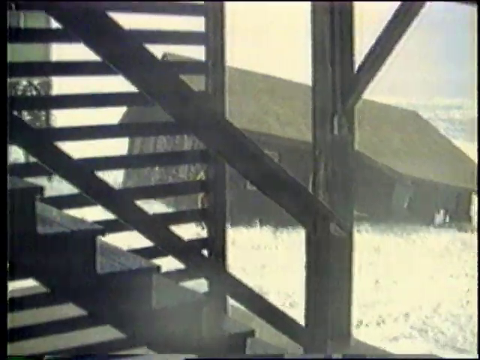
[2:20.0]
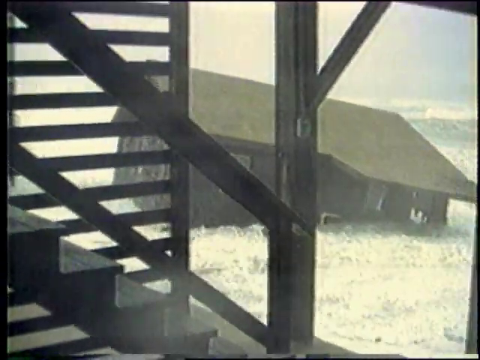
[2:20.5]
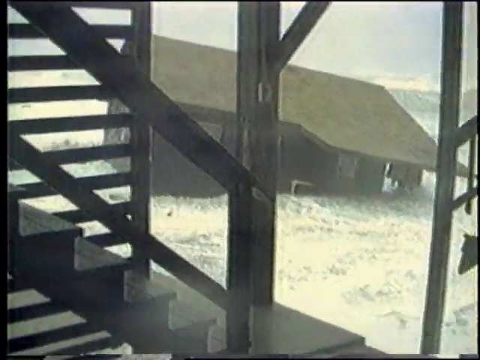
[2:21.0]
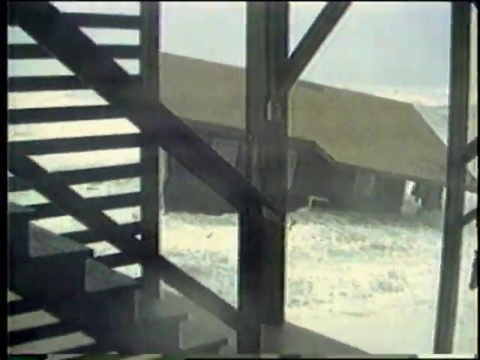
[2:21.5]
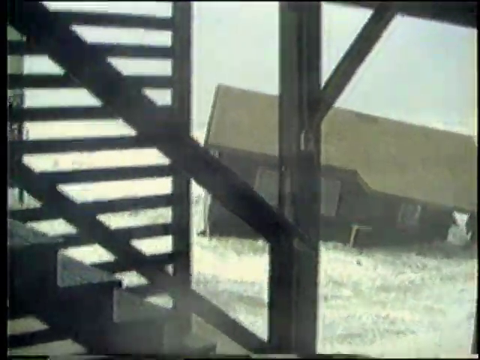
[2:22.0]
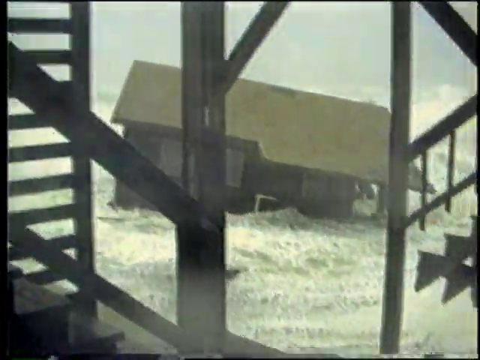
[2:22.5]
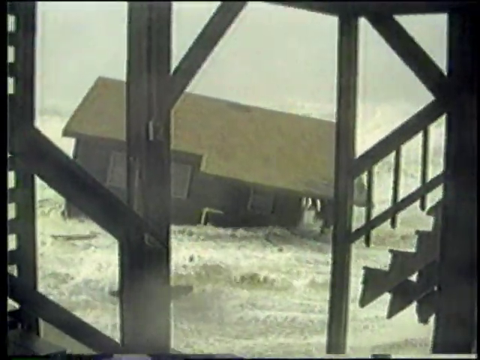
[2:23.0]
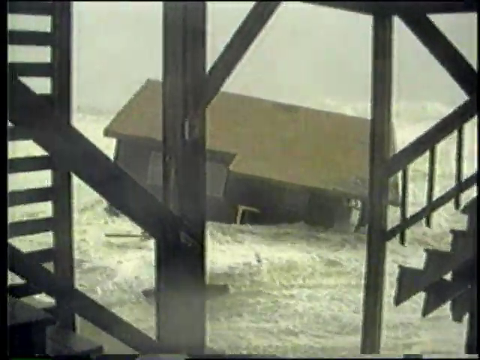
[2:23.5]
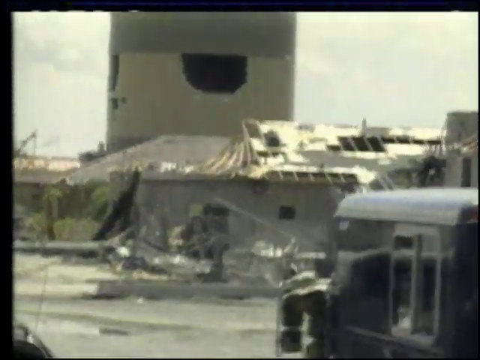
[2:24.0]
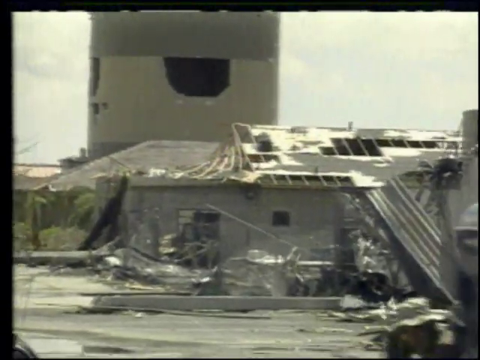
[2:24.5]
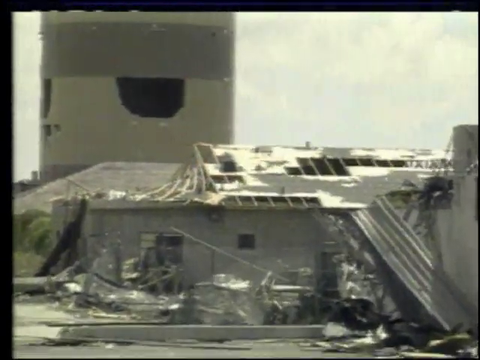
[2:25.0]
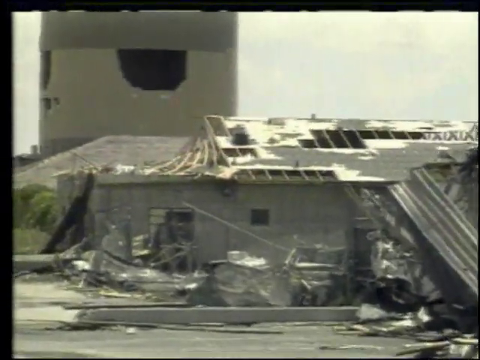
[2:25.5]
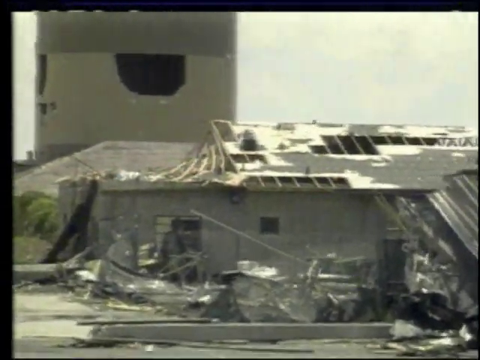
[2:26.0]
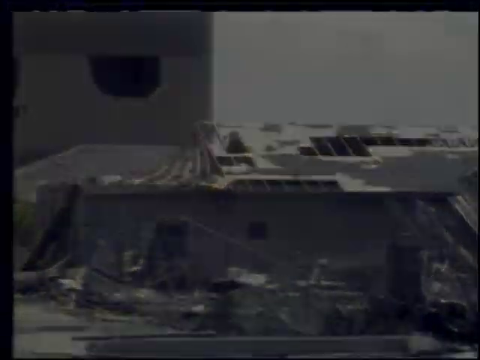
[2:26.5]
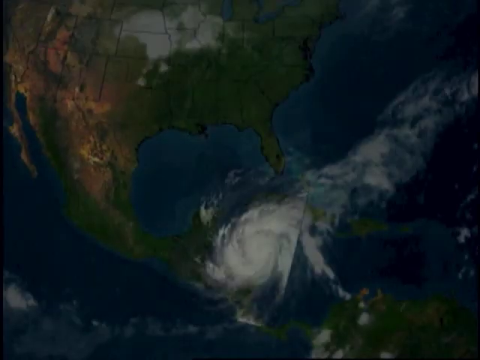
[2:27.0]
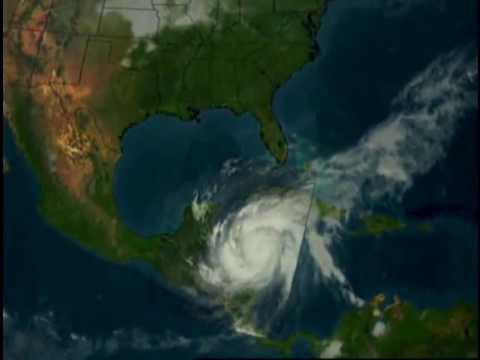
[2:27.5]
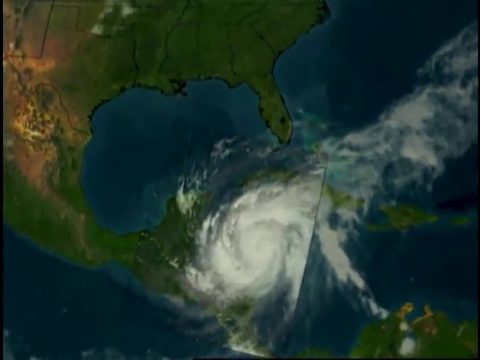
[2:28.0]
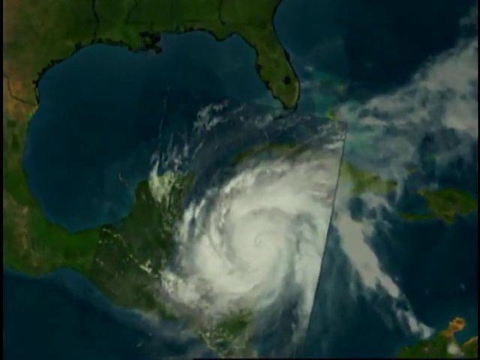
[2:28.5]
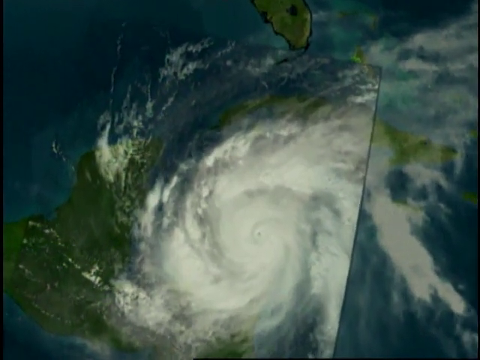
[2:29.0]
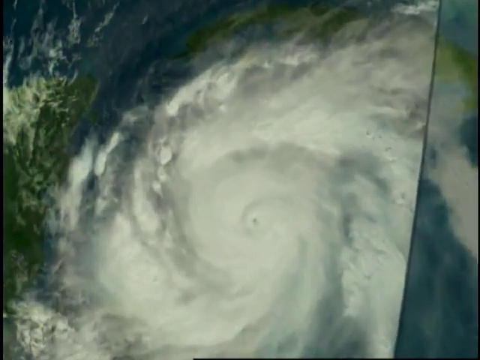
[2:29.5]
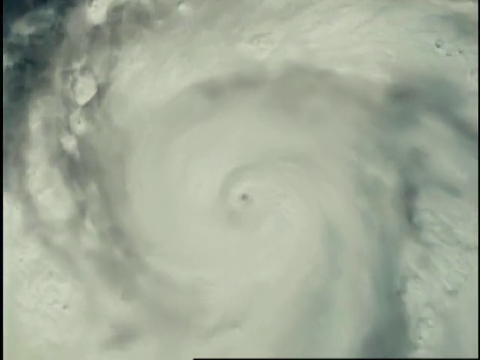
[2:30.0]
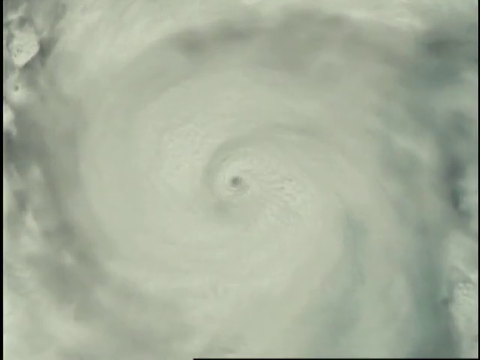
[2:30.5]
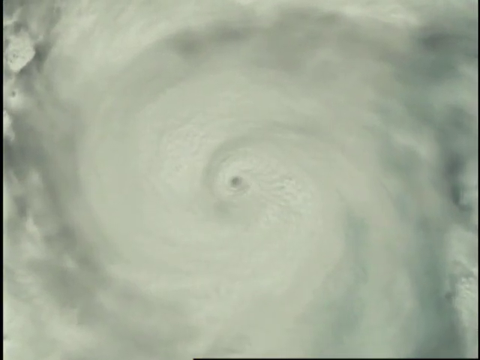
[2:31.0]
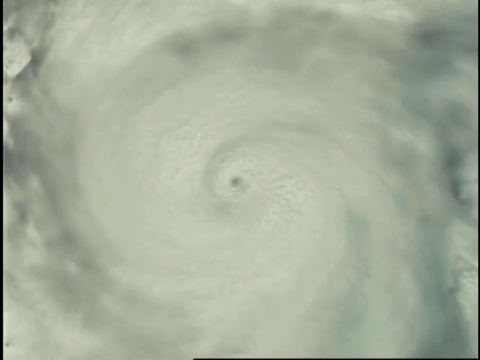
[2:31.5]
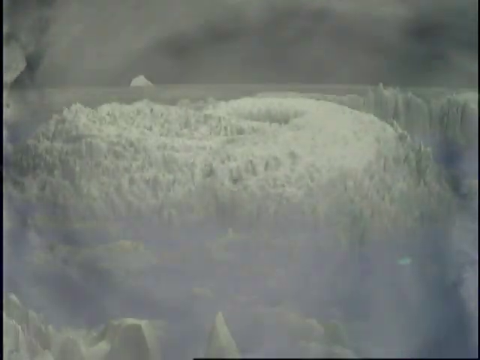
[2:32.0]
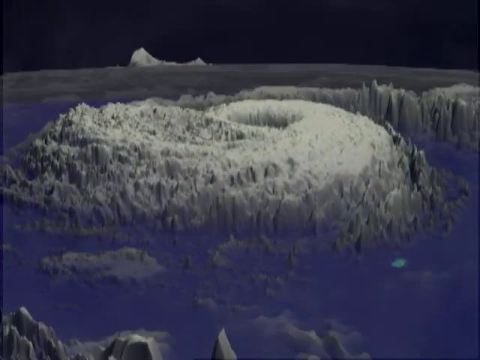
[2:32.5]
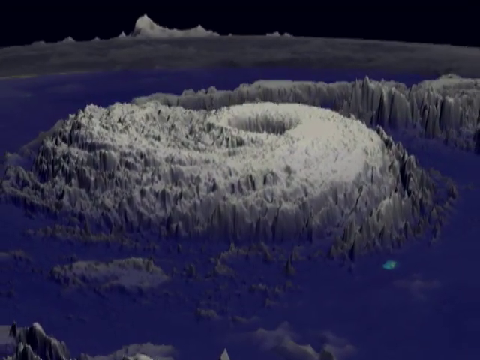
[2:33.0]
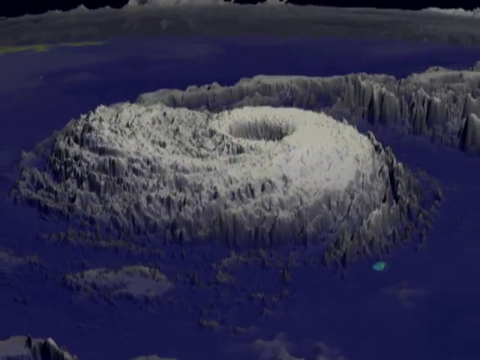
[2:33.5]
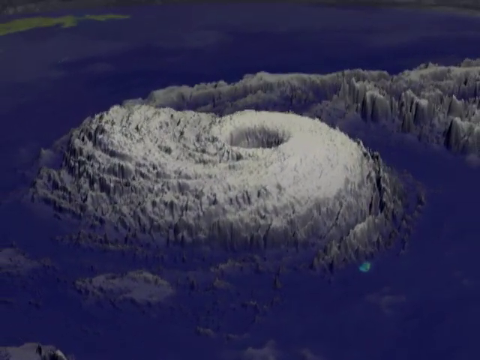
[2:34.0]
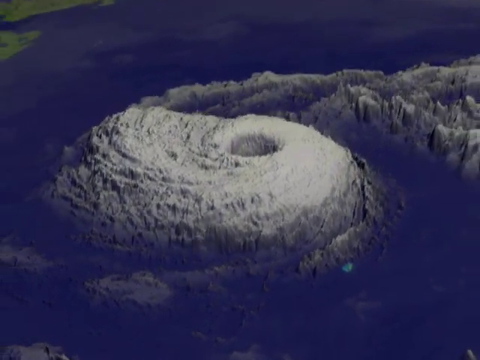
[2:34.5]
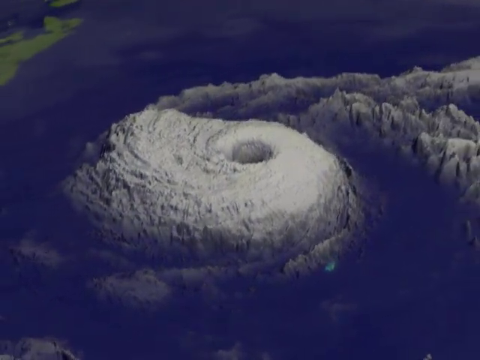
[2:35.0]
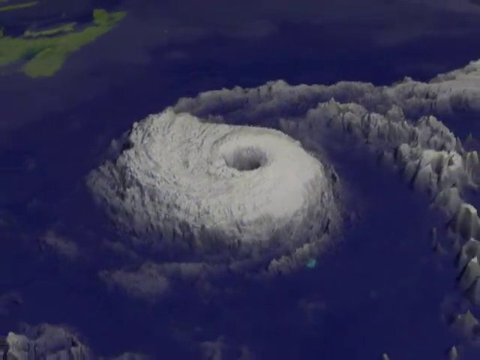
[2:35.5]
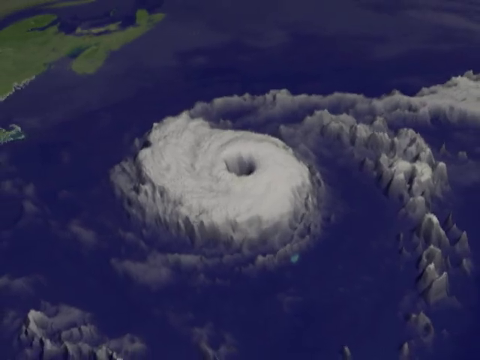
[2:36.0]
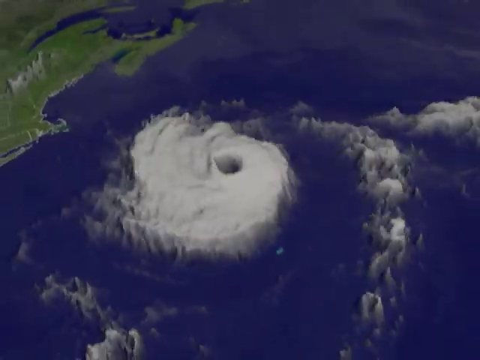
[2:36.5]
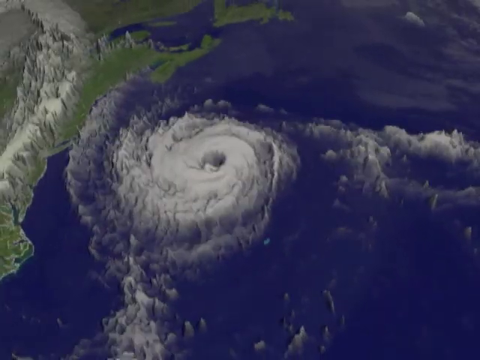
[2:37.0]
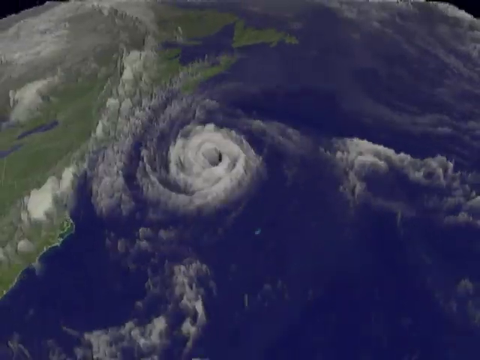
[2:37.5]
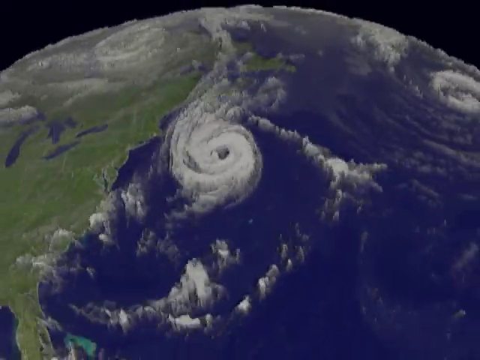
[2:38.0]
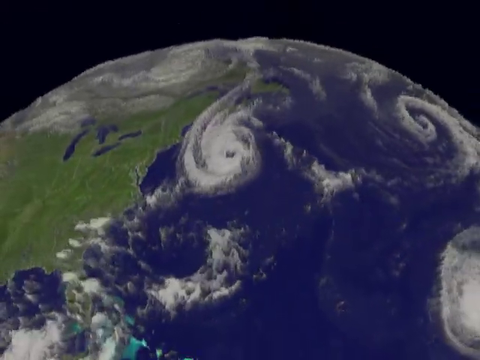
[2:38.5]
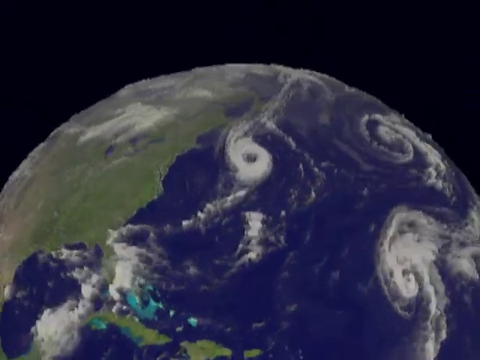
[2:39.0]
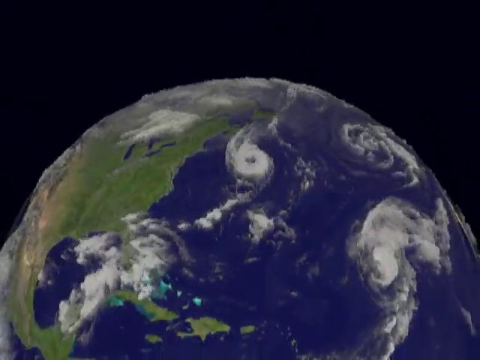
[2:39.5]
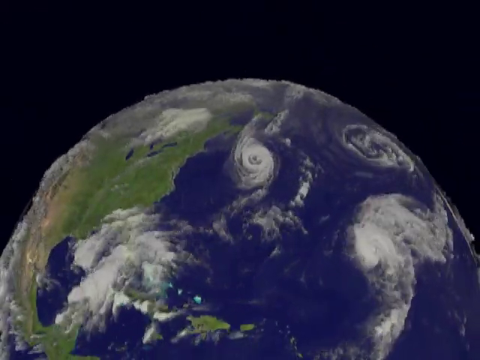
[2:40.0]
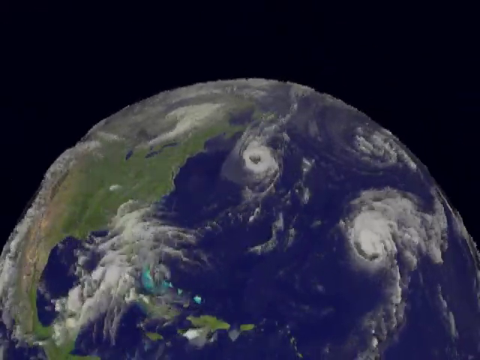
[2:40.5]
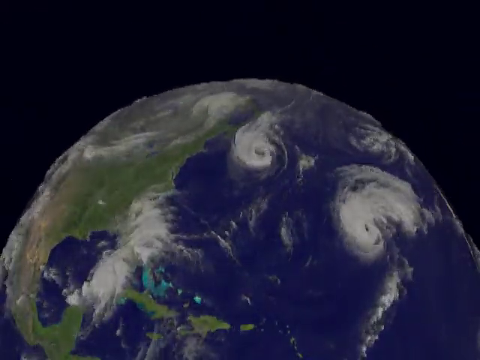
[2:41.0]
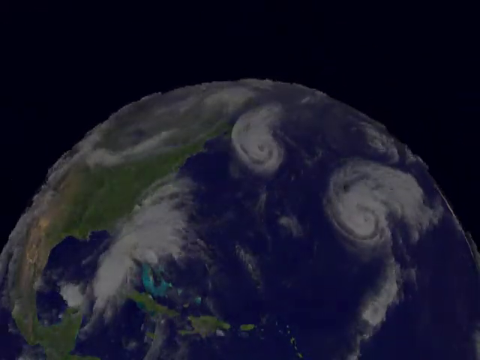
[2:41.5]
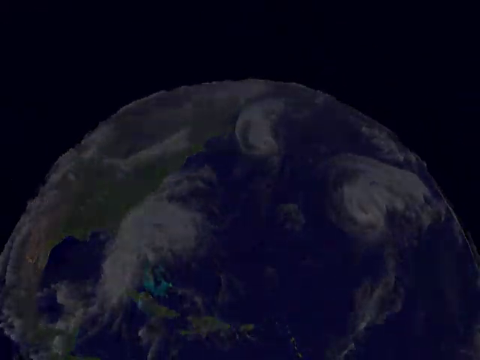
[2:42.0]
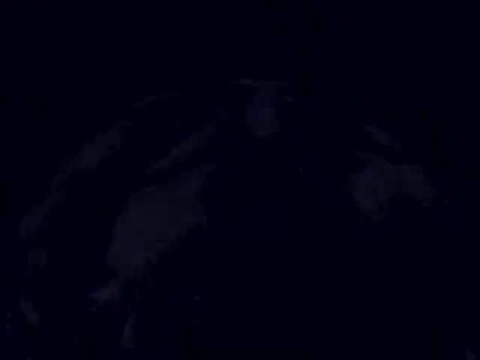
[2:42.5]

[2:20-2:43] Stairs appear, apparently with the camera behind them, going up from the bottom center of the video to the middle left. Some wood around the stairs looks like beams. In the background, churning water sweeps away a house with a green roof, the water moving from the left side of the image to the right. Next comes what looks like the aftermath of a hurricane: a city street at the bottom of the image and a gray building that looks like much of its roof has been blown off, with rafters and the boards of the roof visible and a tall building behind it. Then a picture shows the United States, the Gulf of America and part of the Atlantic Ocean, with white clouds streaming from the top right down toward the bottom middle, where a hurricane of white clouds spins counterclockwise and looks like it is hitting Central America. The view zooms in on it, revealing the eye of the storm. Finally, a 3D representation that sort of looks like a bunch of fluff shows the hurricane moving toward the United States, sort of up the east coast.